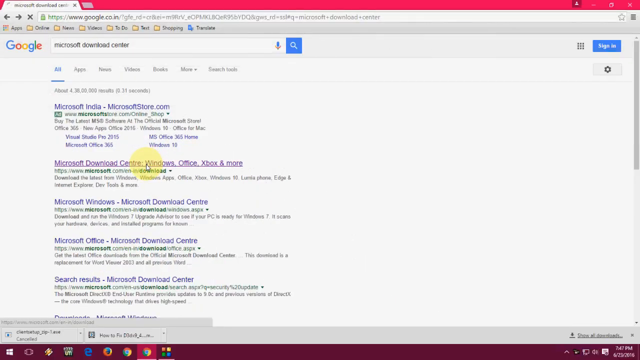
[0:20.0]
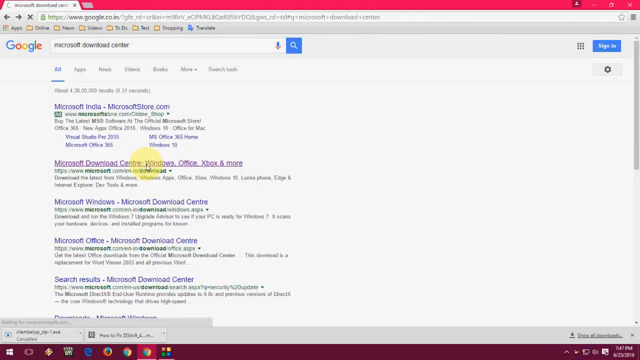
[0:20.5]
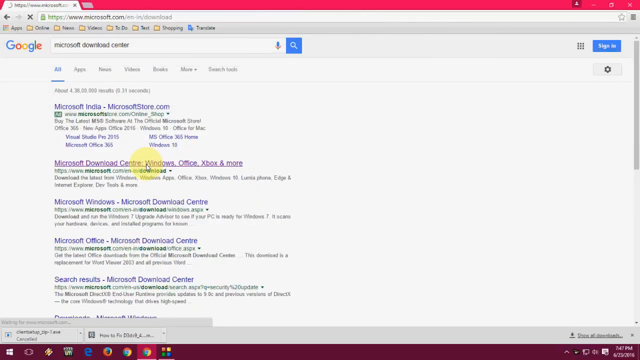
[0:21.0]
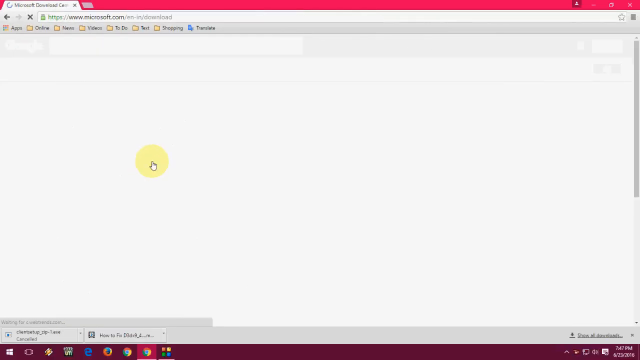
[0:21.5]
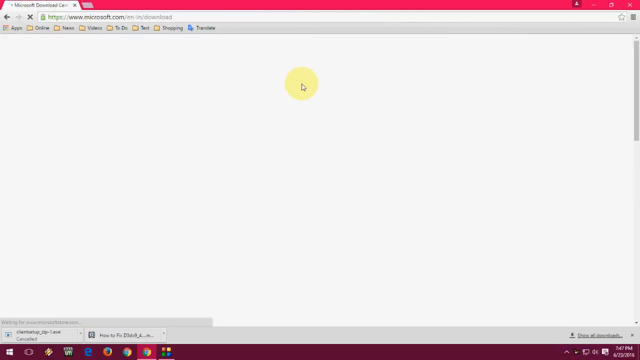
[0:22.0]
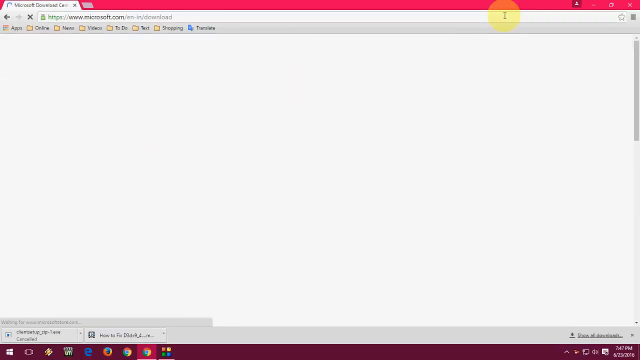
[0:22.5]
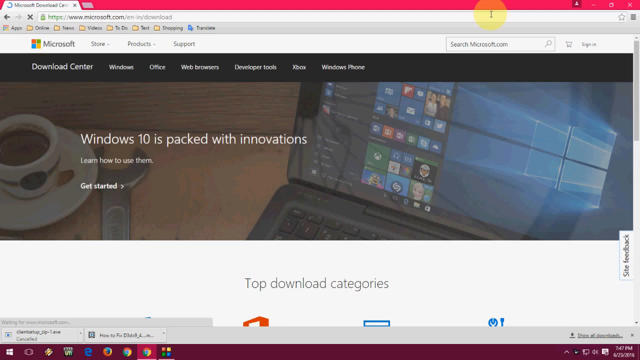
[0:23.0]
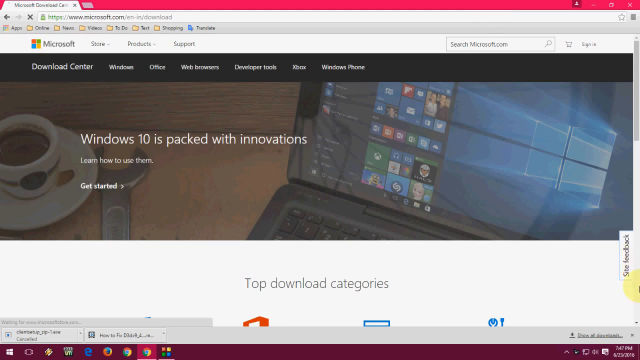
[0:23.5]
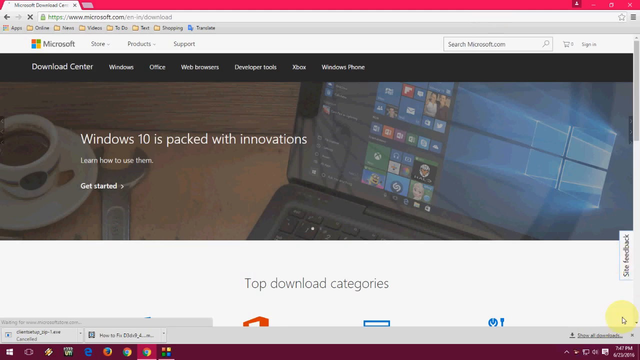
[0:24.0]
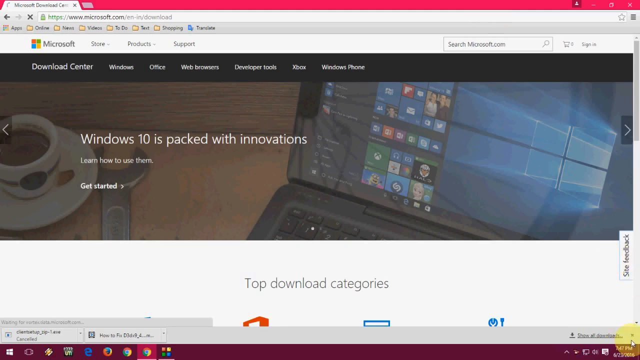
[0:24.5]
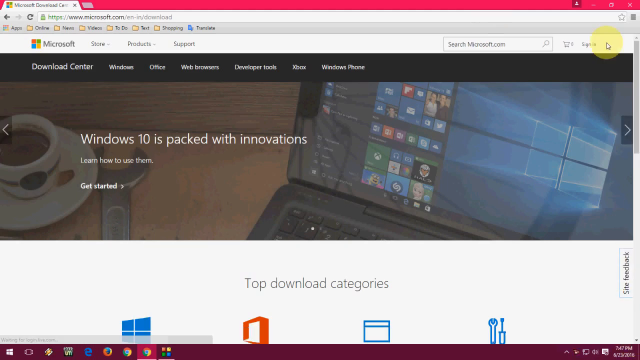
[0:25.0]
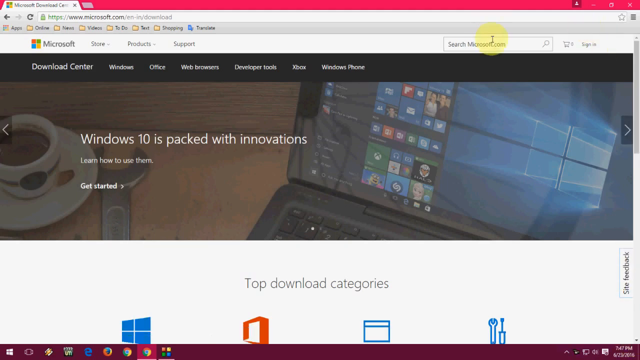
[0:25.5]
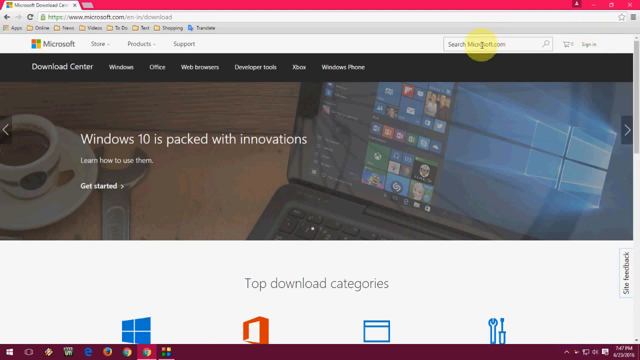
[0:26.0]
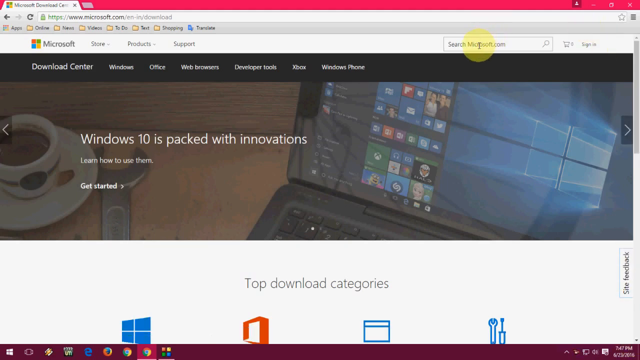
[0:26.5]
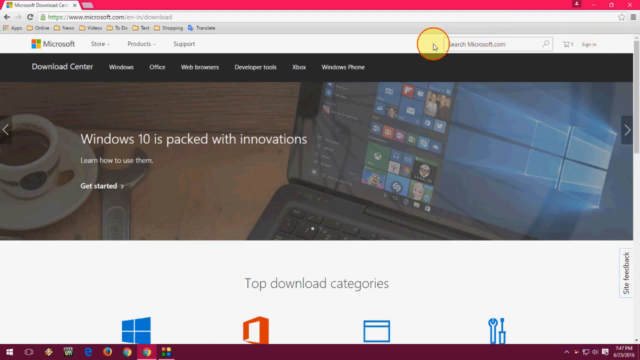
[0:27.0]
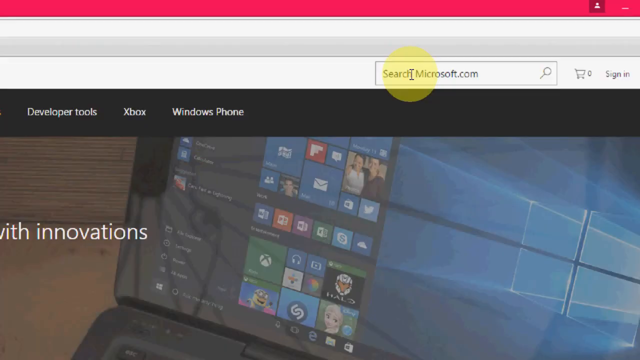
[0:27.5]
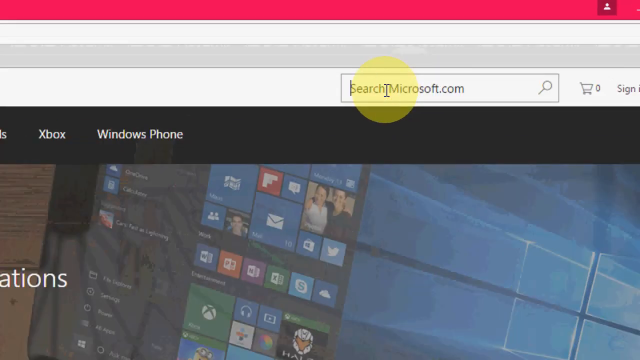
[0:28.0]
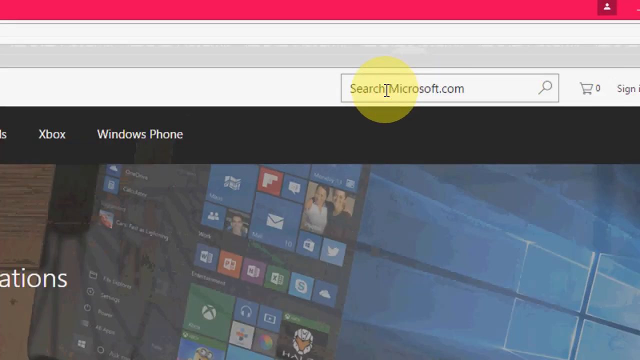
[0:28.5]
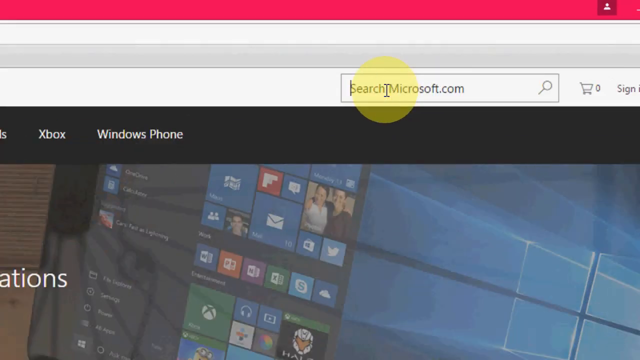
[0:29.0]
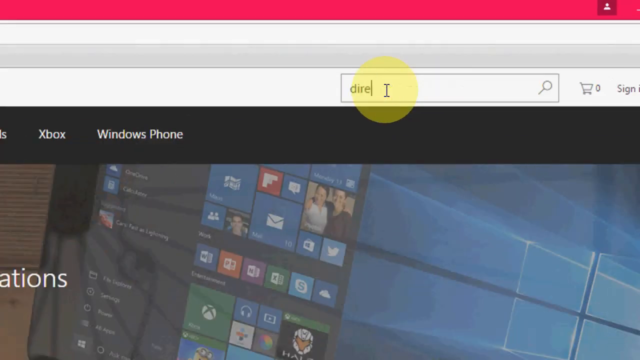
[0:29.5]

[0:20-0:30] A page of Google search results is shown. At the top, the Google search bar contains the phrase "Microsoft Download Center", and underneath is a list of about 43 million results. The cursor, a white arrow with a yellow circle transparently surrounding it, hovers over the second result, which is for the official Microsoft Download Center website. It clicks on it and the page changes to the official Microsoft Download Center web page. In the top right-hand corner are a search bar, a sign-in and a basket. On the left are the Microsoft logo and store, product and support, and a black bar across the top lists Download Center, Windows, Office, web browsers, developer tools, Xbox and Windows Phone. Below is an image of a laptop with the phrase "Windows 10 is packed with innovations" over the top. The cursor moves across to the search bar in the top right-hand corner and clicks into it. The page then zooms in multiple times and the person types the word "direct".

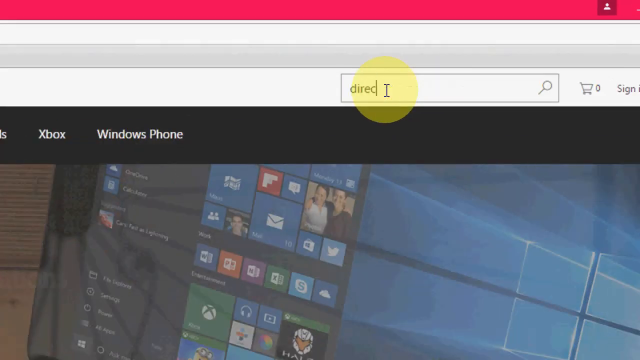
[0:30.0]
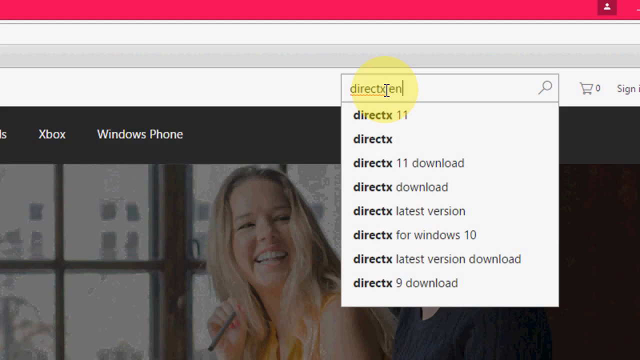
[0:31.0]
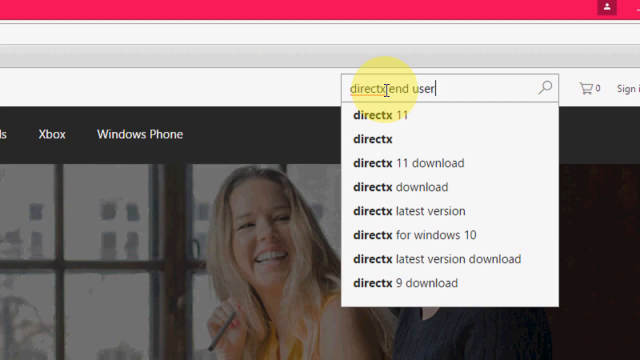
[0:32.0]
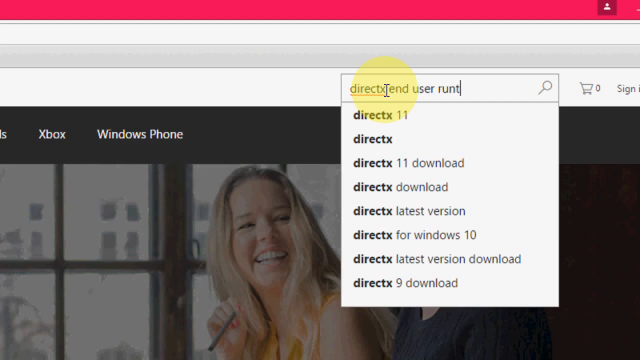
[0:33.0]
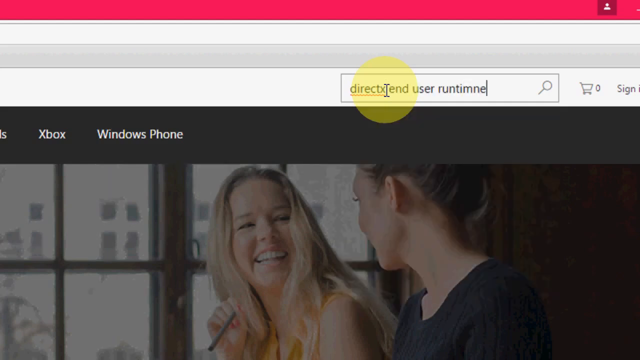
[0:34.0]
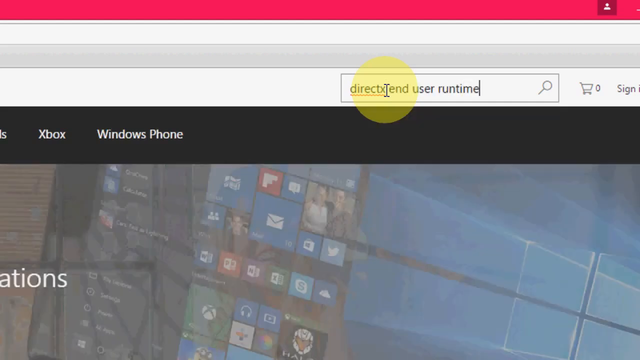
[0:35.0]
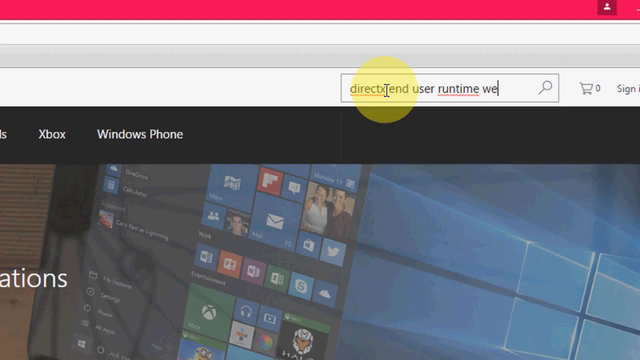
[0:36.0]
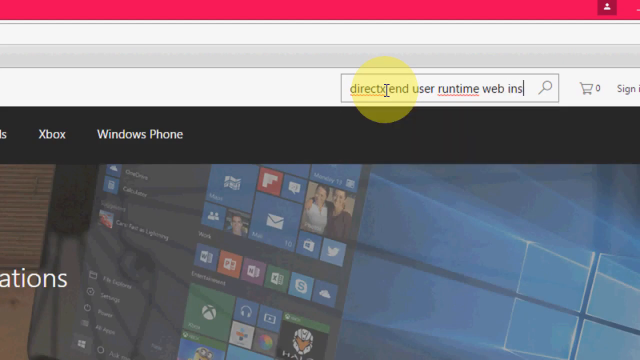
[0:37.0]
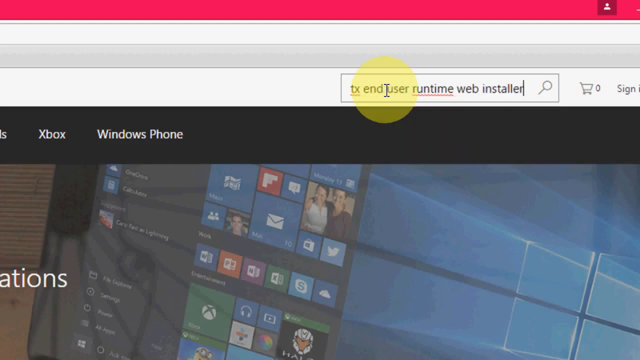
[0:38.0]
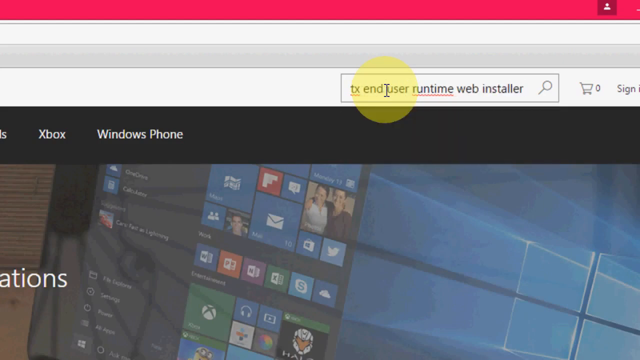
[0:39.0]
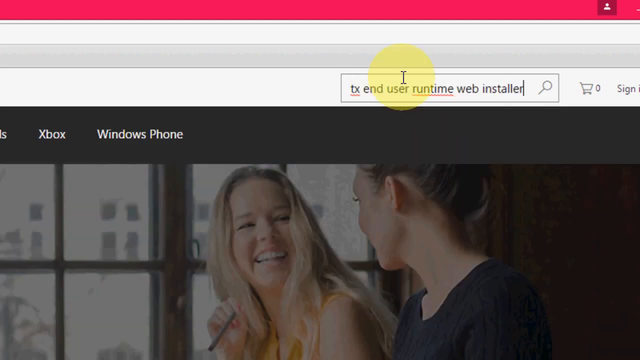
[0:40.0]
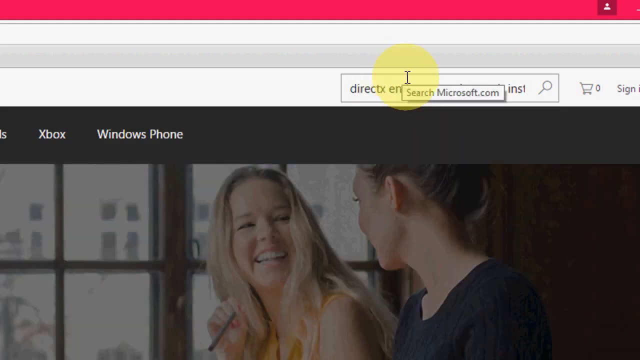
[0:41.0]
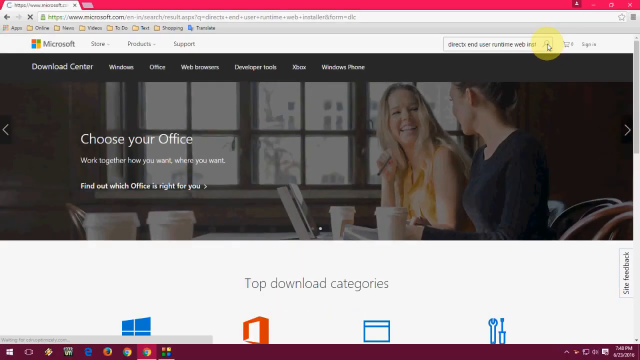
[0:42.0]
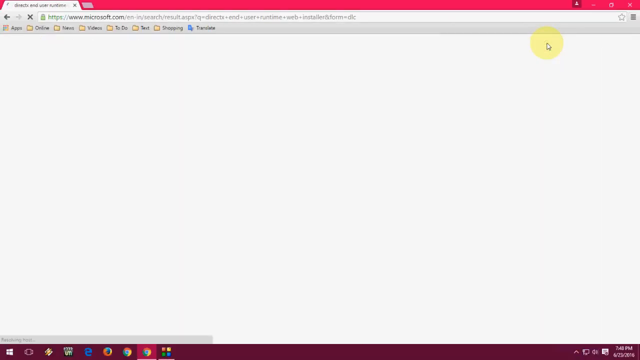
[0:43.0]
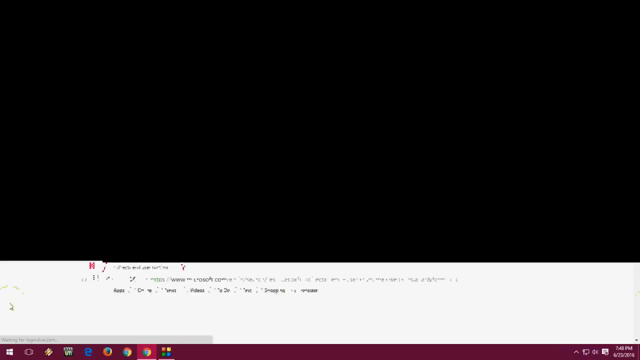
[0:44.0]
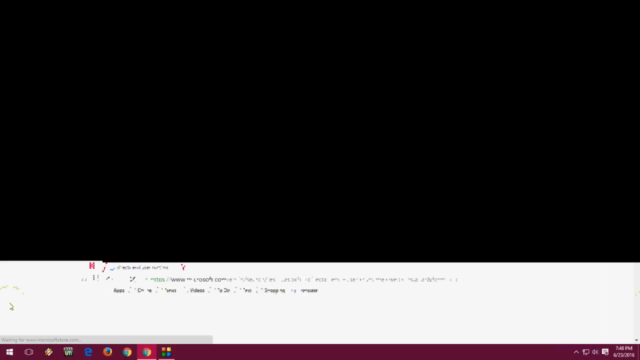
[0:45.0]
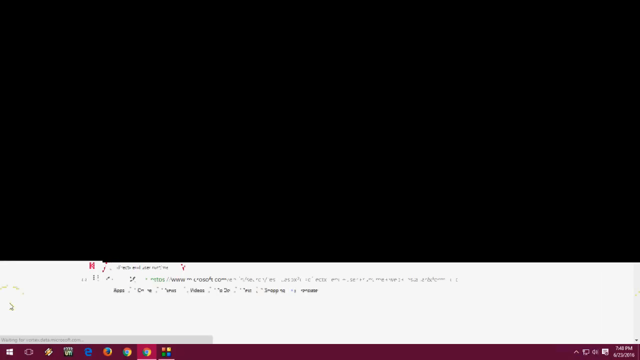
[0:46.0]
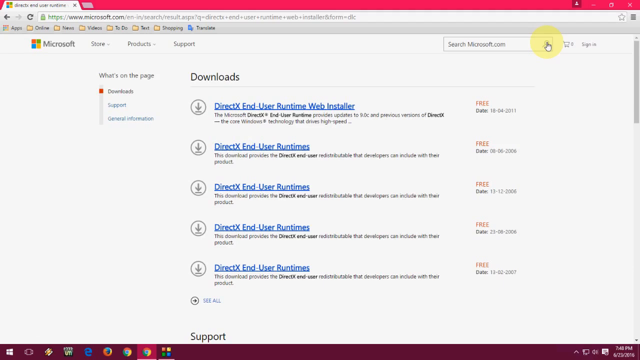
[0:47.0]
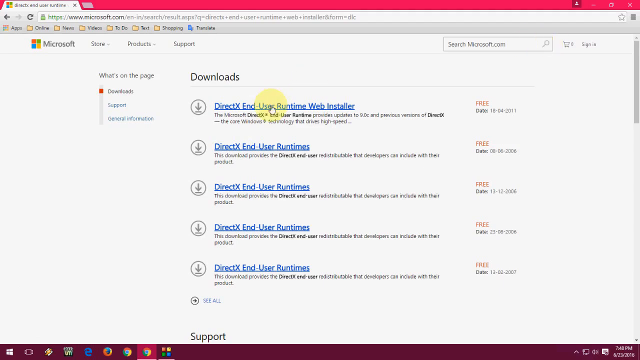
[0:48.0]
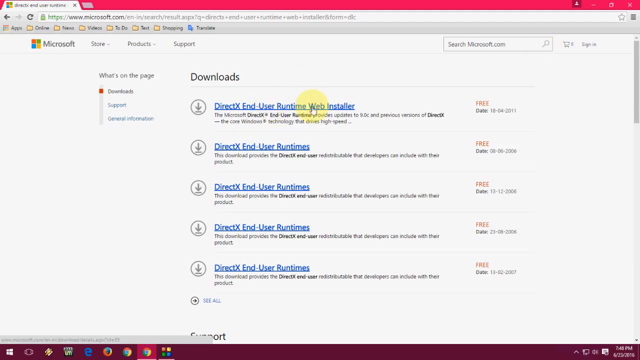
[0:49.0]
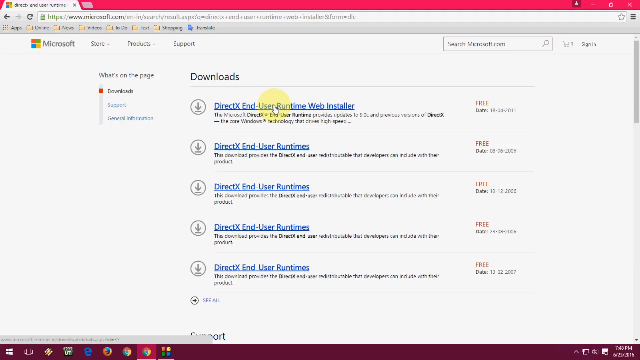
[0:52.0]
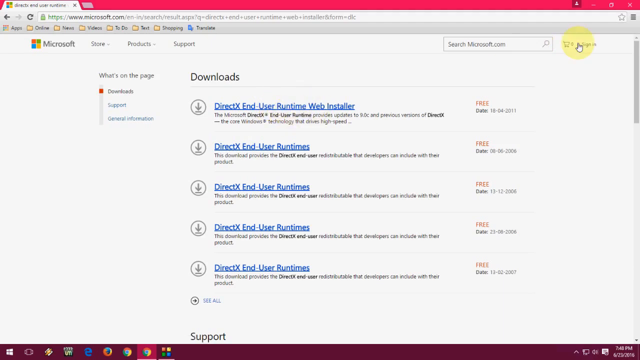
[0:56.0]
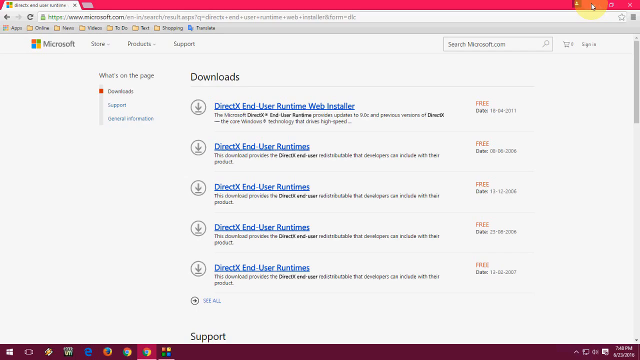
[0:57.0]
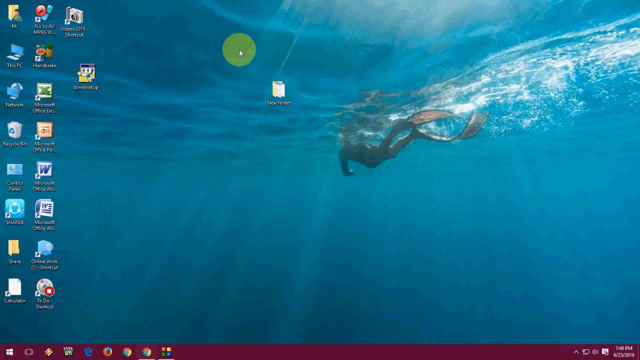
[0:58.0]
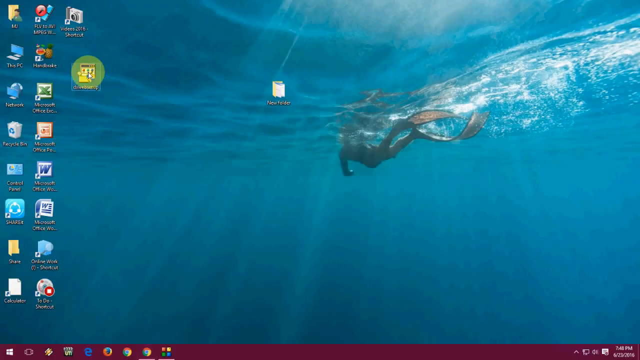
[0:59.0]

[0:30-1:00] The Microsoft website is shown, zoomed in significantly. A cursor with a yellow transparent circle around it hovers over or inside the search bar, where the person using the computer has typed the letters "DIREC" so far. They carry on typing, then go back and correct it so that it reads "direct X end-user runtime web installer". They zoom back out and search for that on the website. The page flashes black and apparently kind of glitchy over and over before it eventually reaches a page that says "downloads" on the Microsoft website. It lists five different options, all of which say "free" on the right-hand side, with blue links for each option and a grey download button on the left that looks like a circle with an arrow going down to a horizontal line. The cursor moves over to the first option on the list, which says "DirectX End User Runtime Web Installer", and hovers over it.